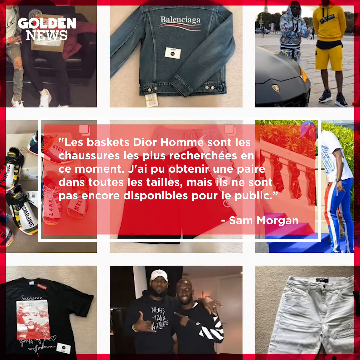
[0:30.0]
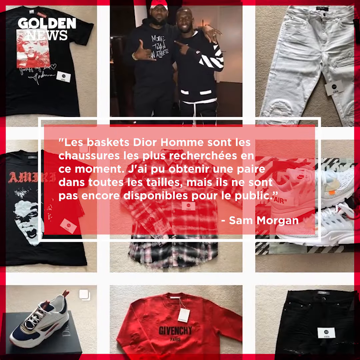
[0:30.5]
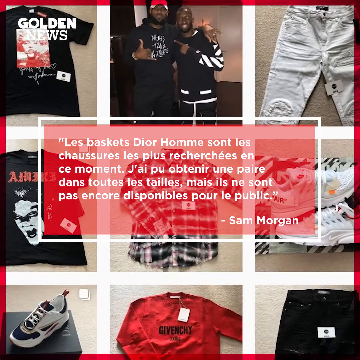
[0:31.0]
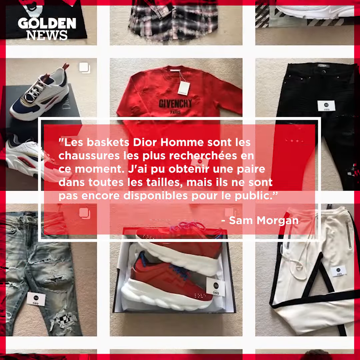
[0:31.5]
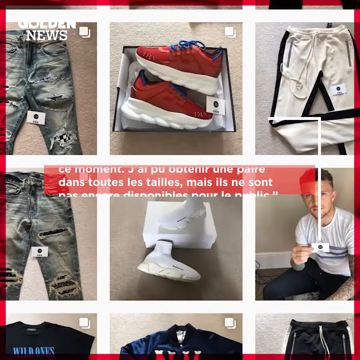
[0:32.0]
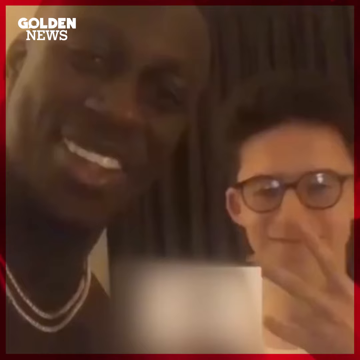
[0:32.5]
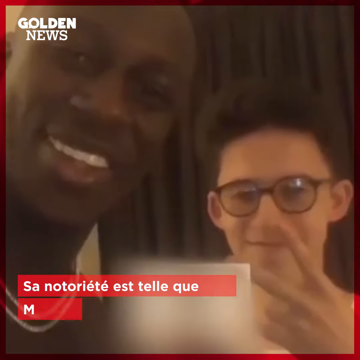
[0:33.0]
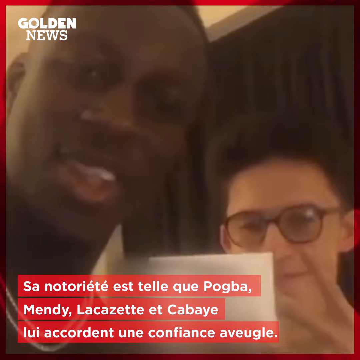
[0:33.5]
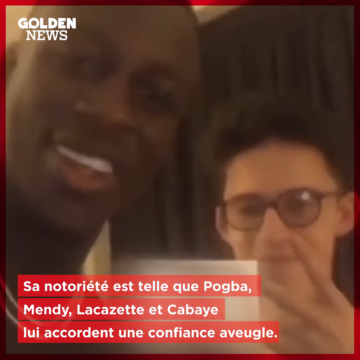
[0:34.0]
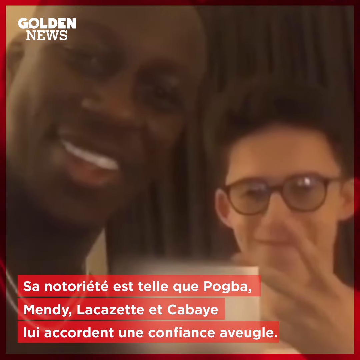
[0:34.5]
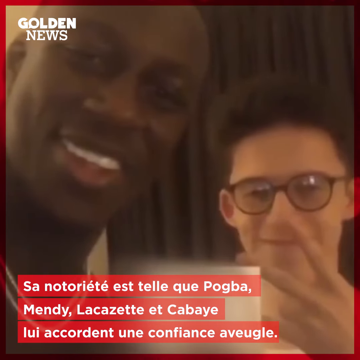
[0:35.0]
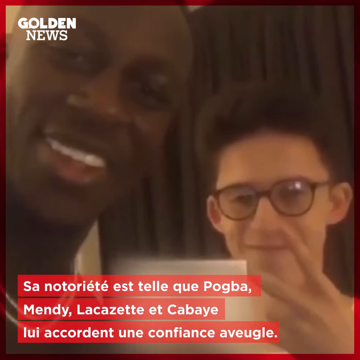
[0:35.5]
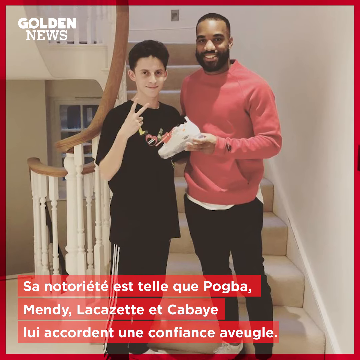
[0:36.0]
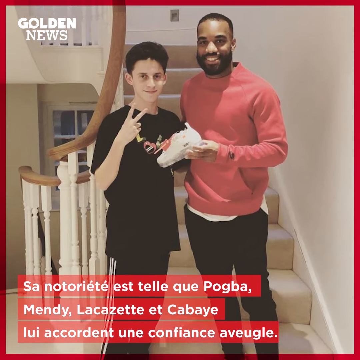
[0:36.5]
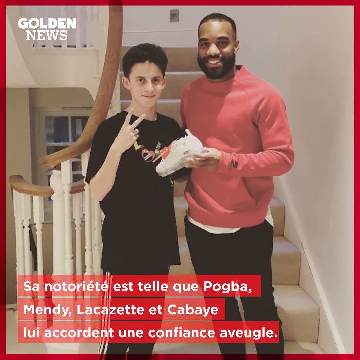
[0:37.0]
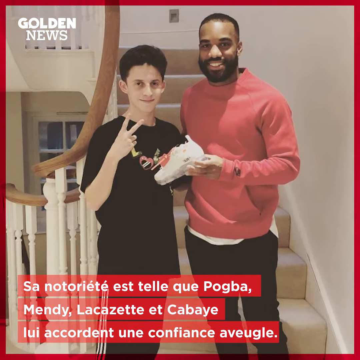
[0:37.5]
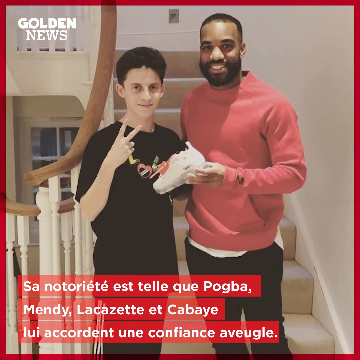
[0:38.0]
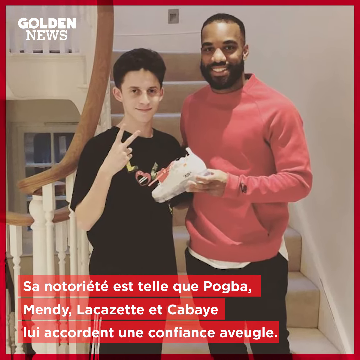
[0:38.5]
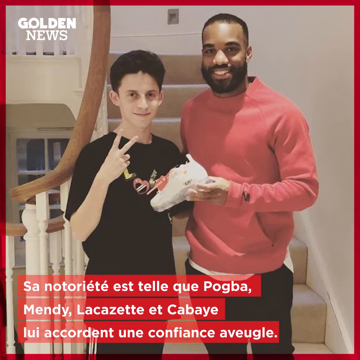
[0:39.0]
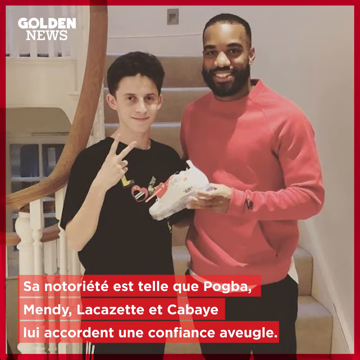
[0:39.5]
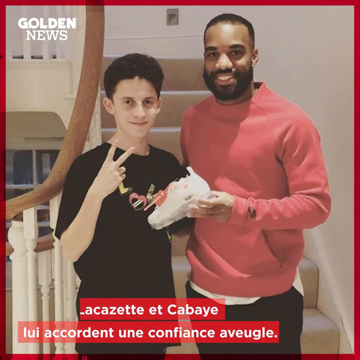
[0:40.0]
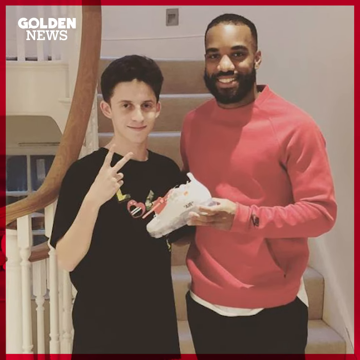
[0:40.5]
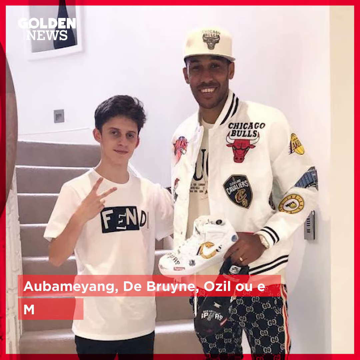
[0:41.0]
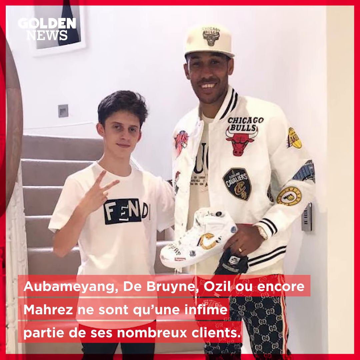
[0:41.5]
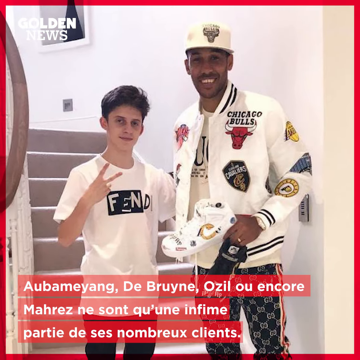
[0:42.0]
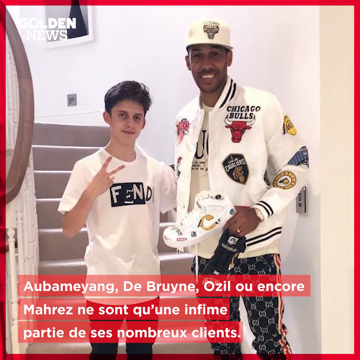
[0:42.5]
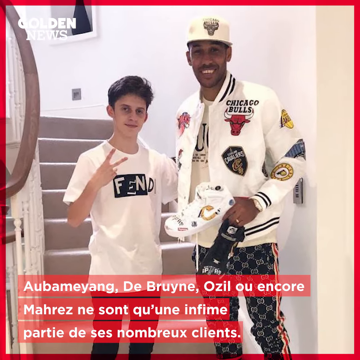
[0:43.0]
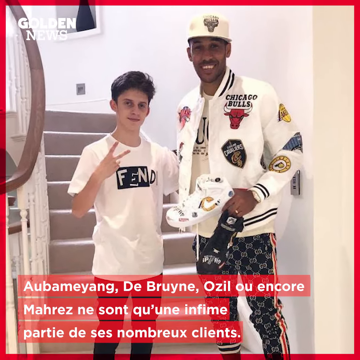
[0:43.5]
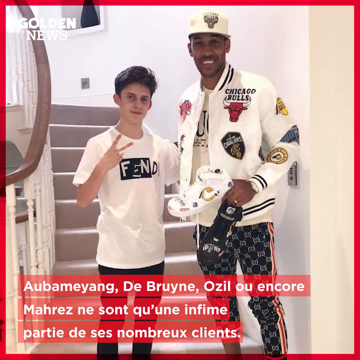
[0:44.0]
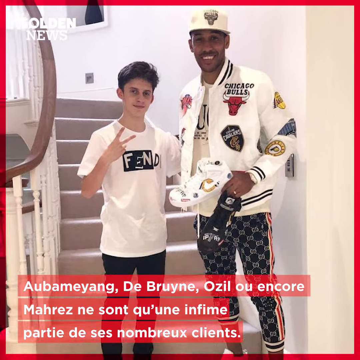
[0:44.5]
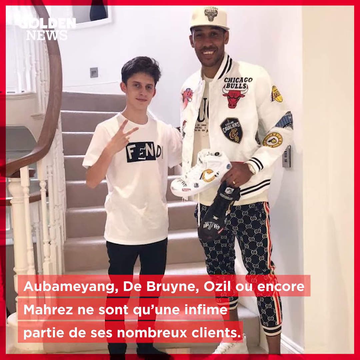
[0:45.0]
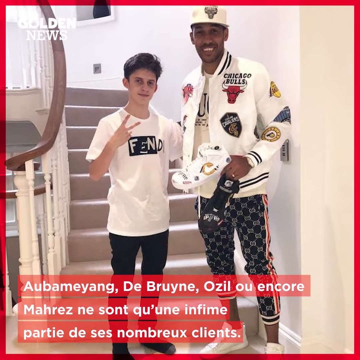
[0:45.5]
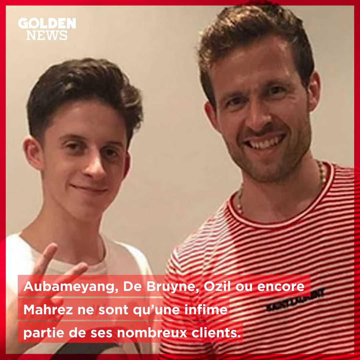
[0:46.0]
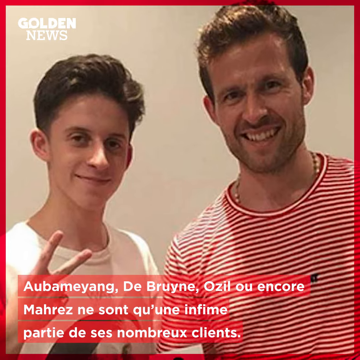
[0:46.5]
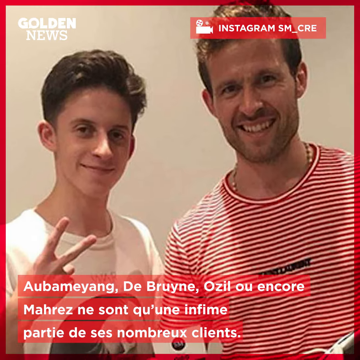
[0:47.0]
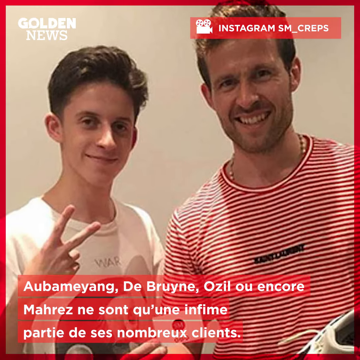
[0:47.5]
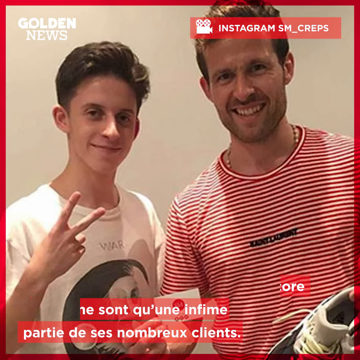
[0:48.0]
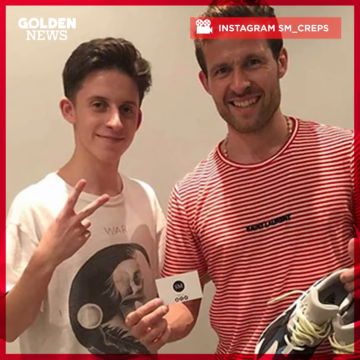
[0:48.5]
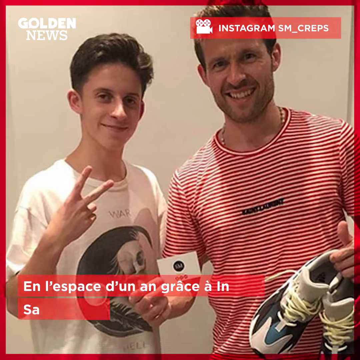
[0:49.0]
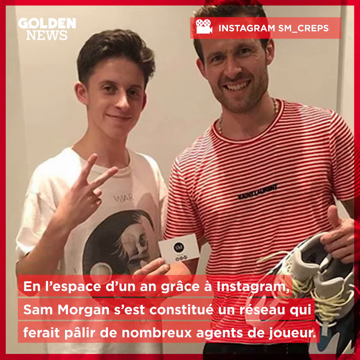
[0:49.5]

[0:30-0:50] The video scrolls through a set of what look like Instagram posts, each row holding three square photos of either luxury designer clothing, such as jackets, or the personal shopper Sam Morgan with athletes. A transition shows what looks like a black professional footballer and Sam Morgan taking a selfie, with white text in red text boxes at the bottom about the photo. Another photo shows Sam Morgan next to a taller black man in a red shirt, both standing on a stairway; the video zooms in on this photo, where Sam Morgan and the man hold up a shoe between them. A very similar photo follows, showing another professional footballer and Sam Morgan standing together with a white Nike shoe held between them. The white text about the photos continues at the bottom as a final photo shows a white footballer and Sam Morgan standing next to each other.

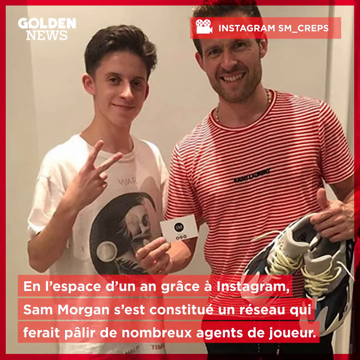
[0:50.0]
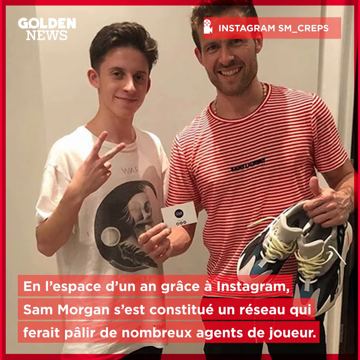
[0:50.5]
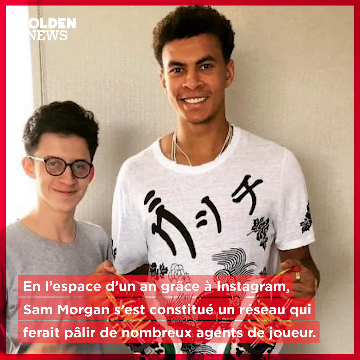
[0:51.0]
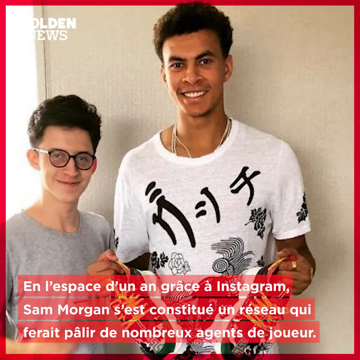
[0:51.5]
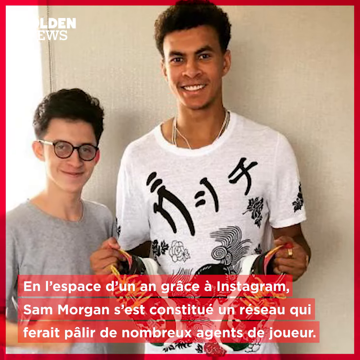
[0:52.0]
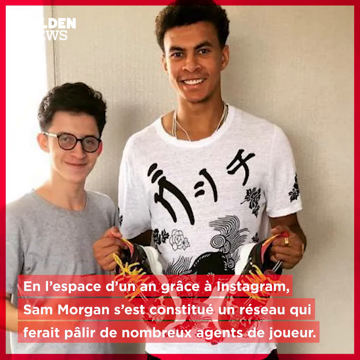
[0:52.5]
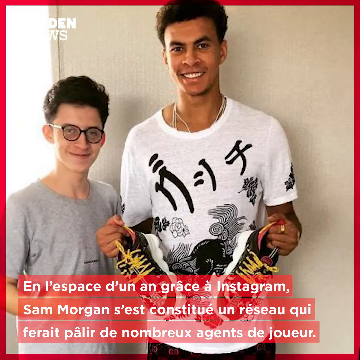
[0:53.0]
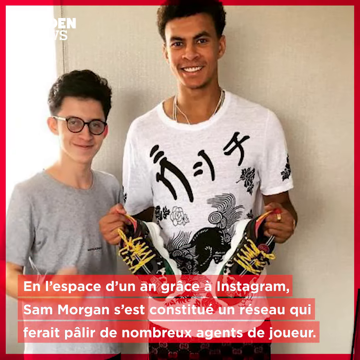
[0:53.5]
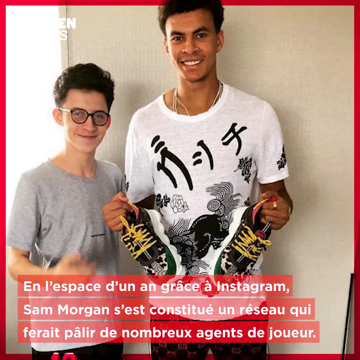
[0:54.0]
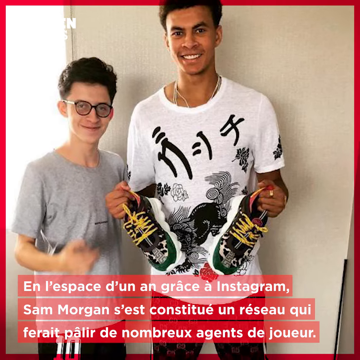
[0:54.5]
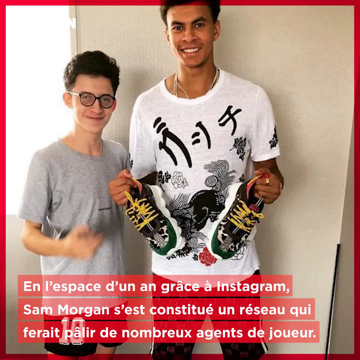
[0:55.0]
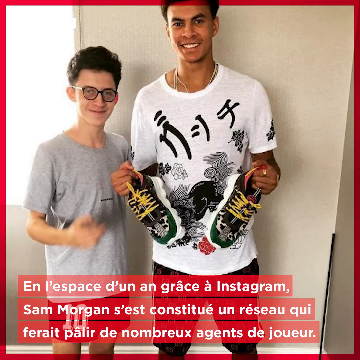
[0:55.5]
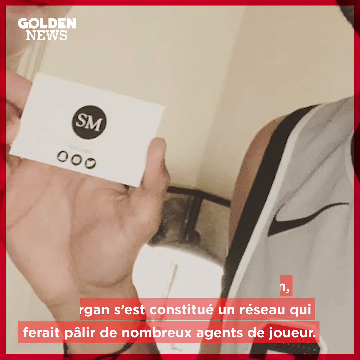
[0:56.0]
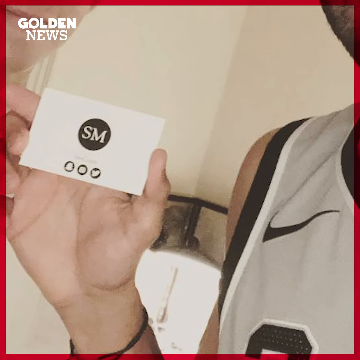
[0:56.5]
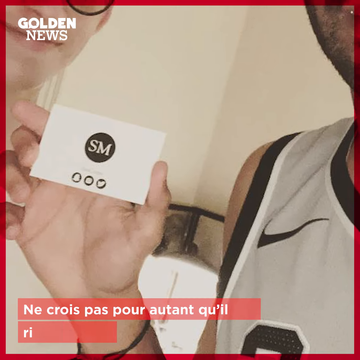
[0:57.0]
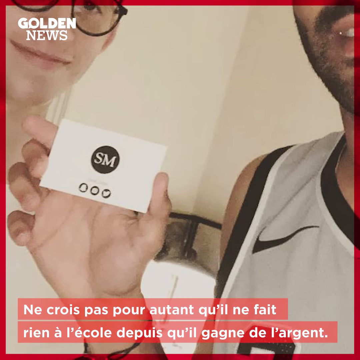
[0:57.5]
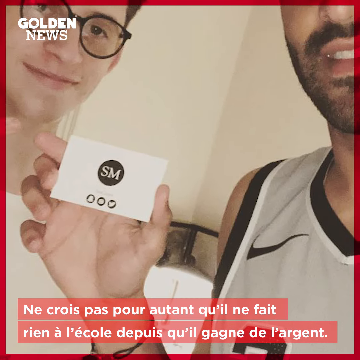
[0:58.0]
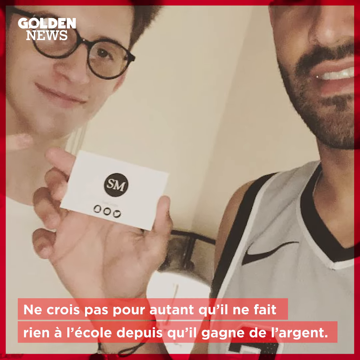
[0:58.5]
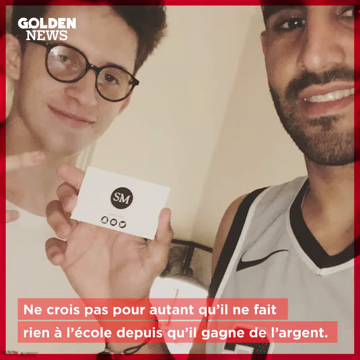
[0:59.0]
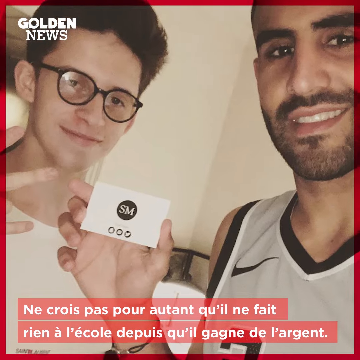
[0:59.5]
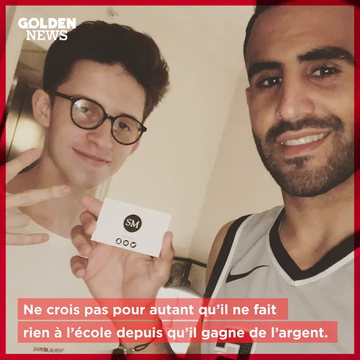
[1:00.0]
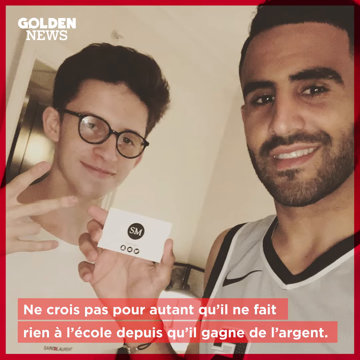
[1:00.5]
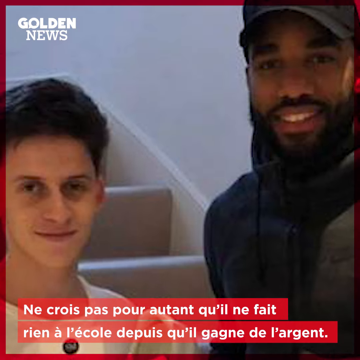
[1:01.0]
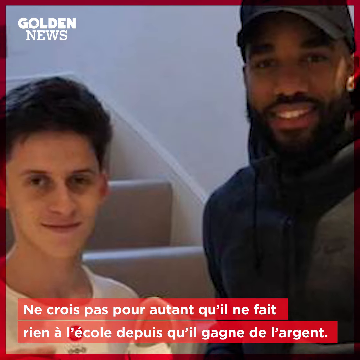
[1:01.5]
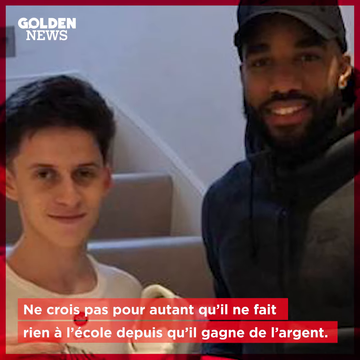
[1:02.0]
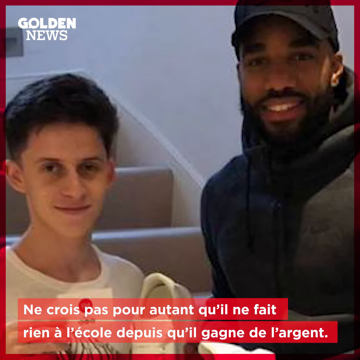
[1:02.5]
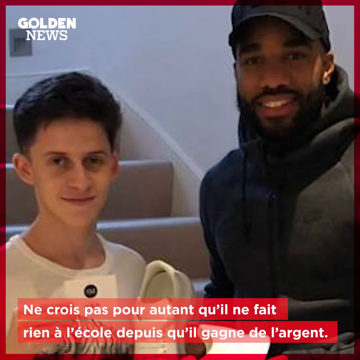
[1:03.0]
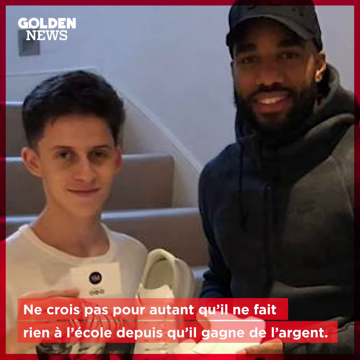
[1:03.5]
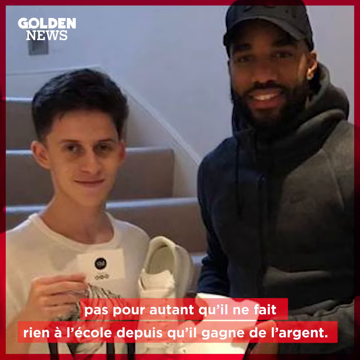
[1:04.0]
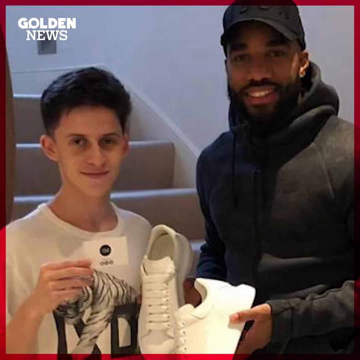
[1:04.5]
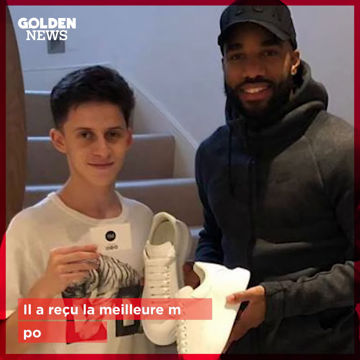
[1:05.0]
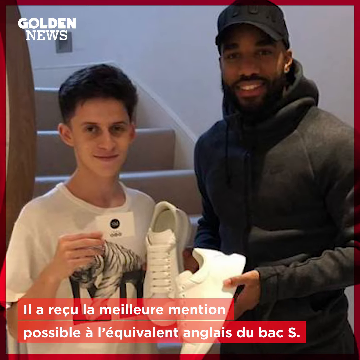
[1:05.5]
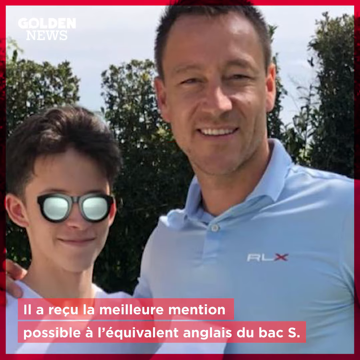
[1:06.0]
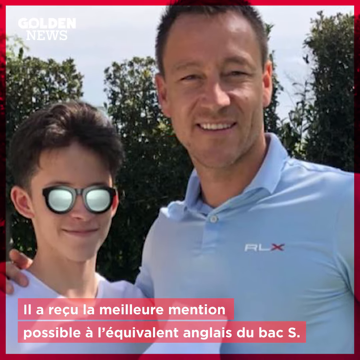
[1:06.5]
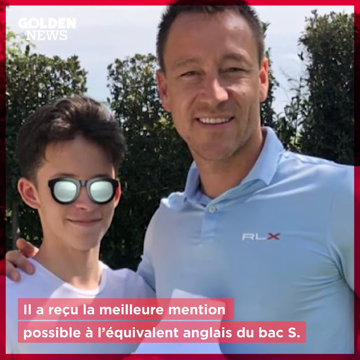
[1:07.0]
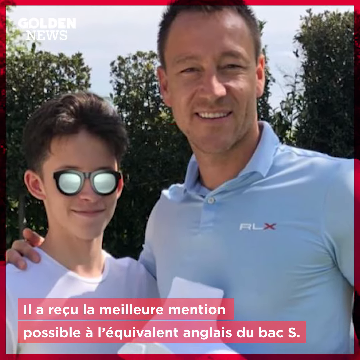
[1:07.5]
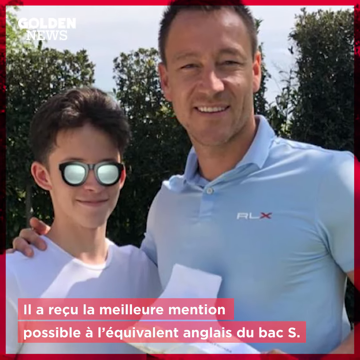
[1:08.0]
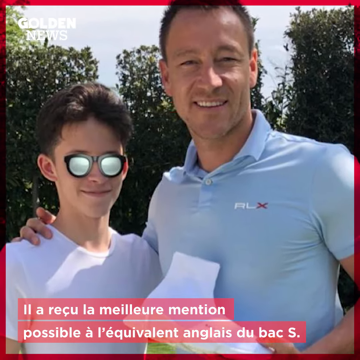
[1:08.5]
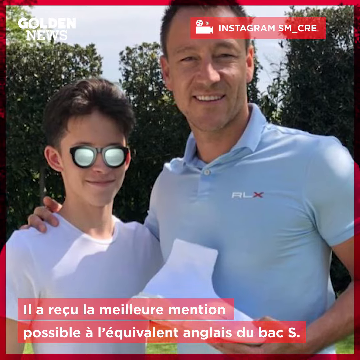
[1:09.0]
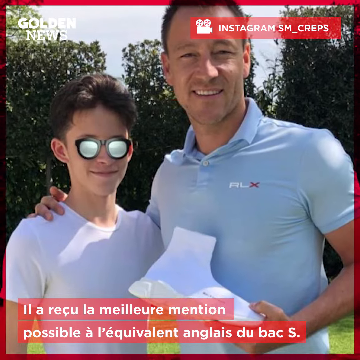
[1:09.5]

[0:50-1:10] A photo of Sam Morgan next to a footballer transitions into other photos of Sam Morgan with footballers. The third image shows the footballer standing next to Sam Morgan, holding up Sam Morgan's business card, a white rectangular card with a black "SM" in the middle. Throughout, white text in red text boxes appears at the bottom explaining the photos. At the top right is an Instagram tag for the account that is promoting or using the photos, and a news station's logo, Golden News, stays at the top left throughout. Each photo is either being zoomed out of or zoomed in on. Sam Morgan stands next to each of the men, who are holding either shoes or a business card.